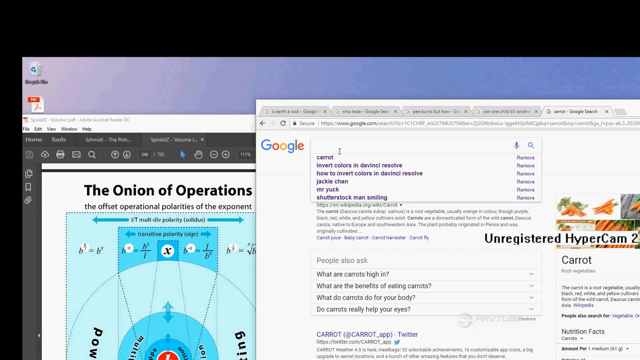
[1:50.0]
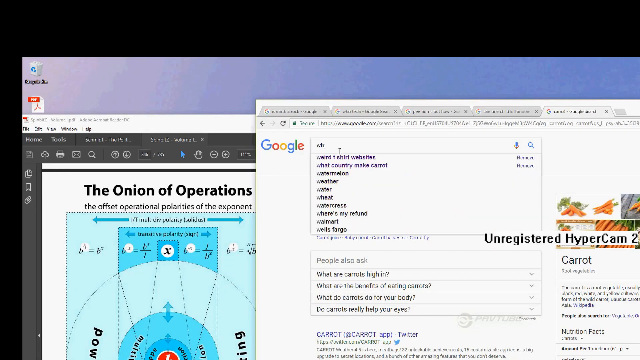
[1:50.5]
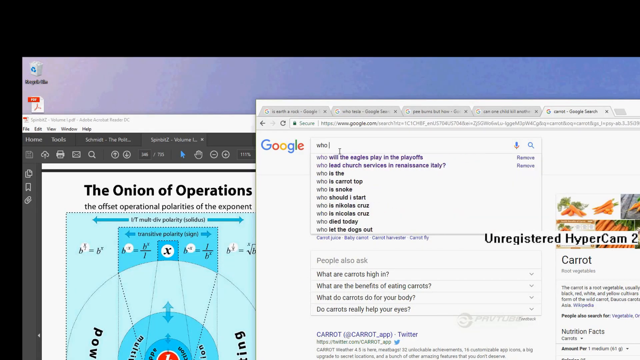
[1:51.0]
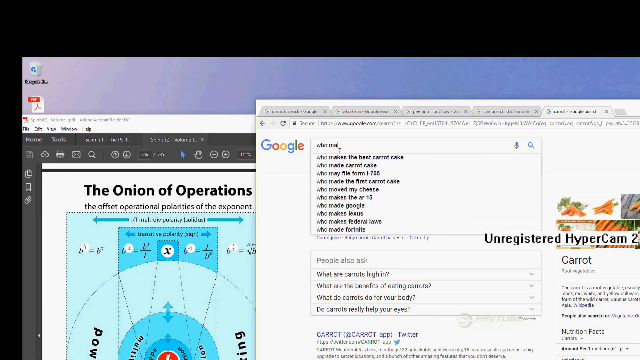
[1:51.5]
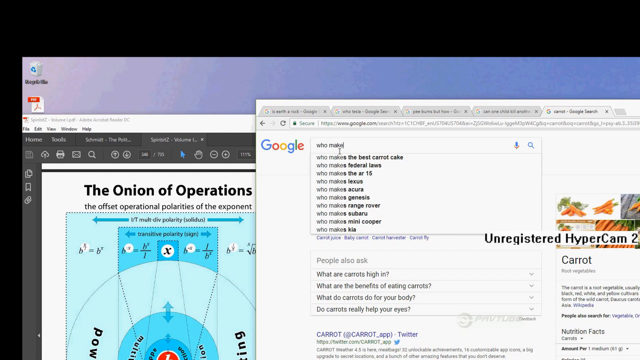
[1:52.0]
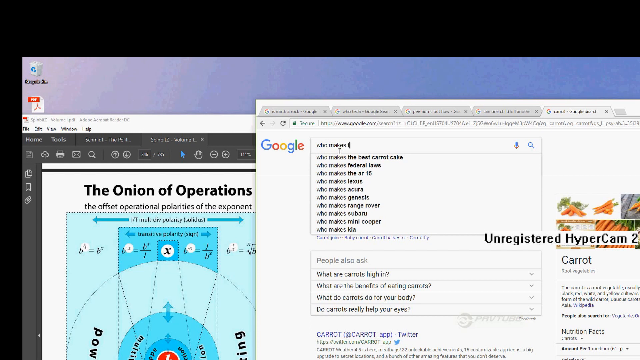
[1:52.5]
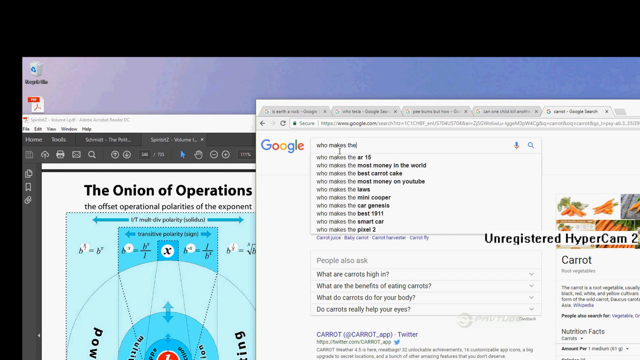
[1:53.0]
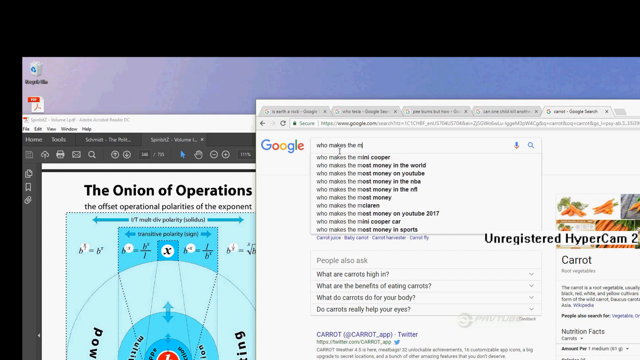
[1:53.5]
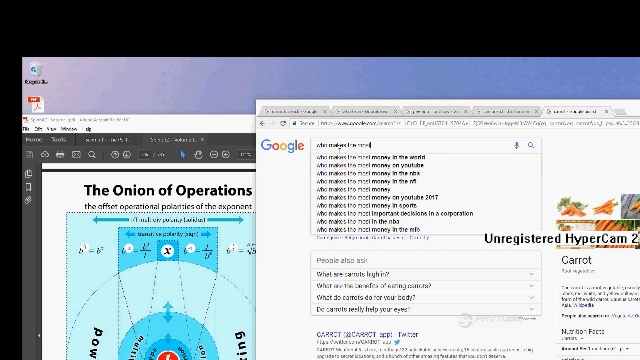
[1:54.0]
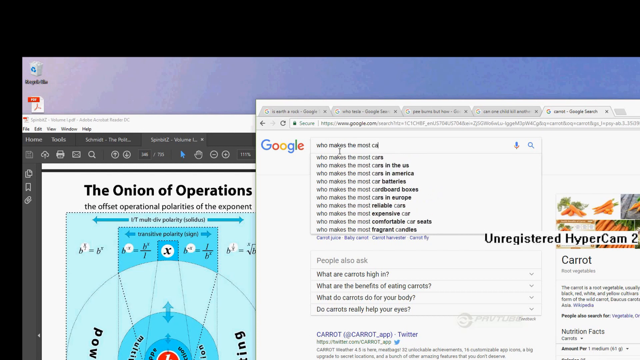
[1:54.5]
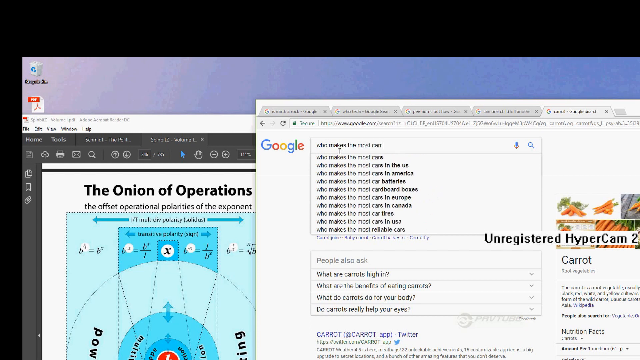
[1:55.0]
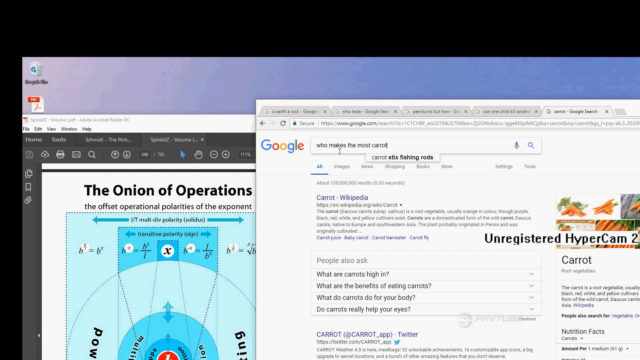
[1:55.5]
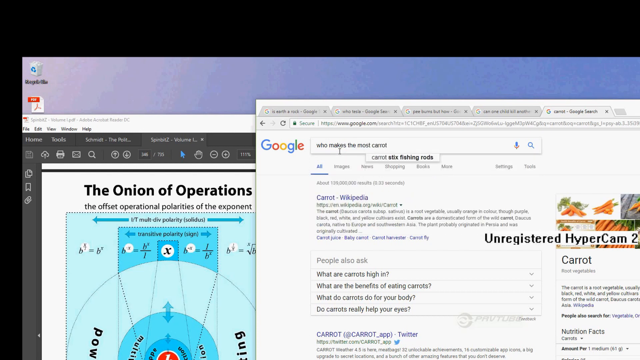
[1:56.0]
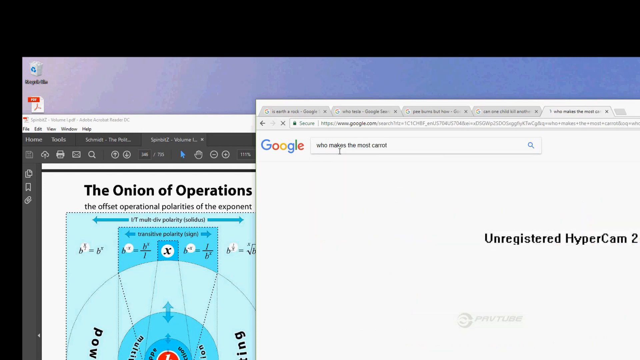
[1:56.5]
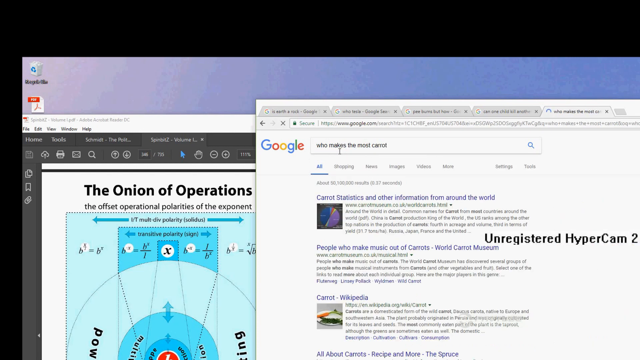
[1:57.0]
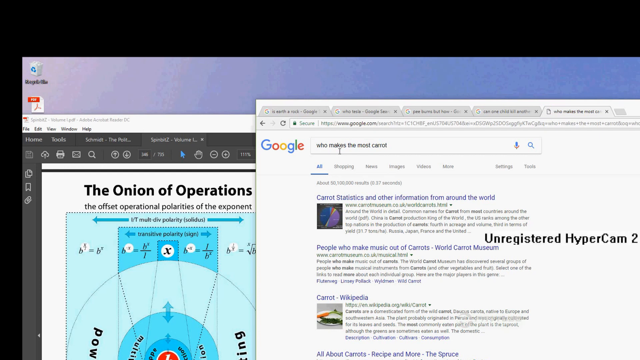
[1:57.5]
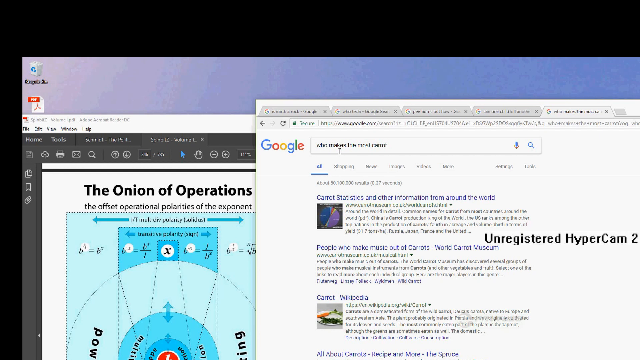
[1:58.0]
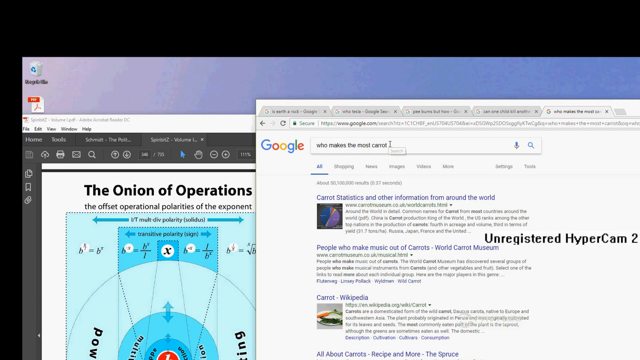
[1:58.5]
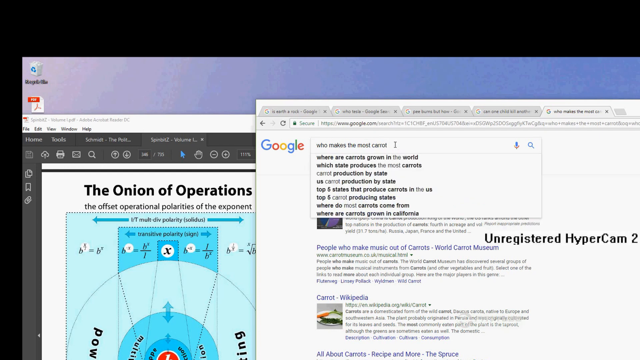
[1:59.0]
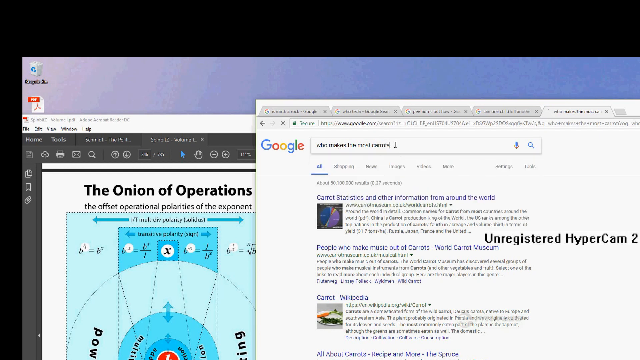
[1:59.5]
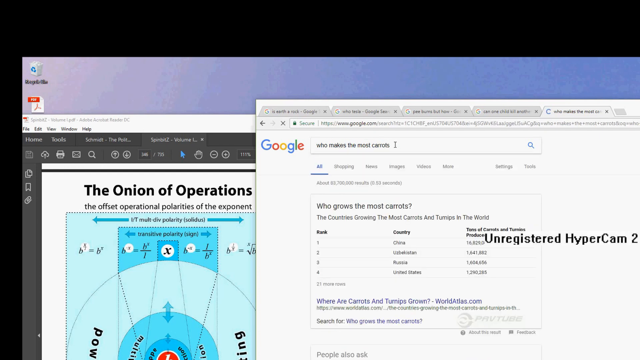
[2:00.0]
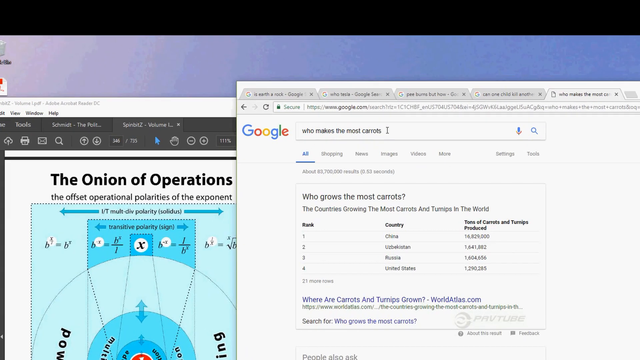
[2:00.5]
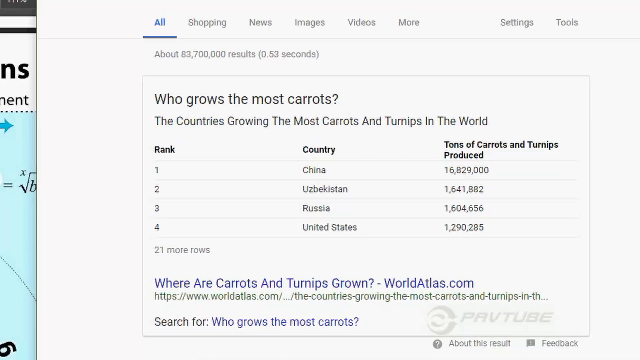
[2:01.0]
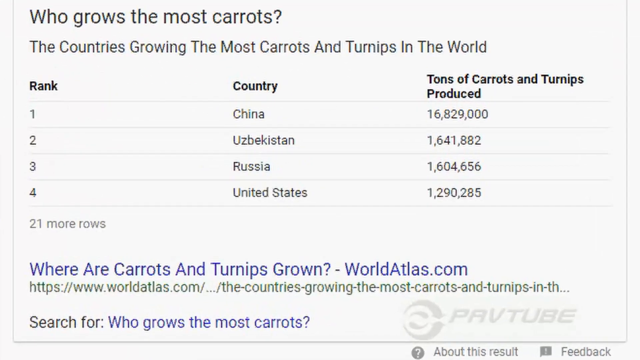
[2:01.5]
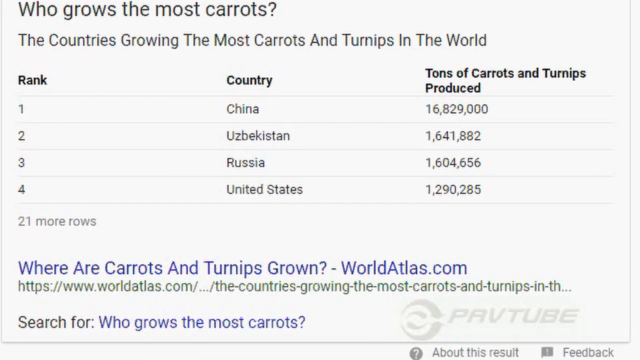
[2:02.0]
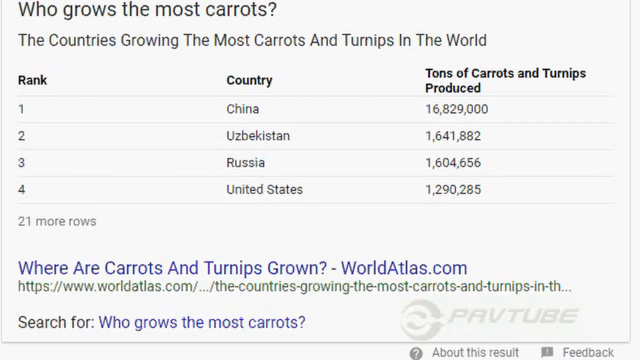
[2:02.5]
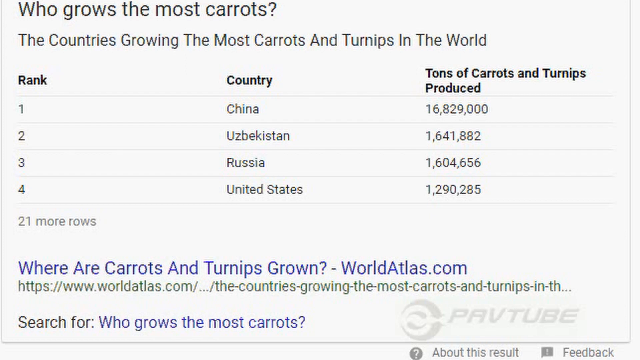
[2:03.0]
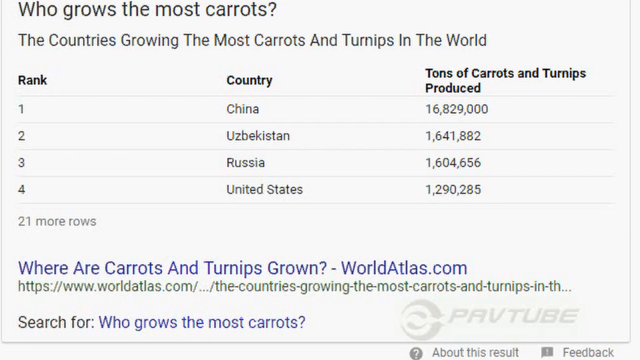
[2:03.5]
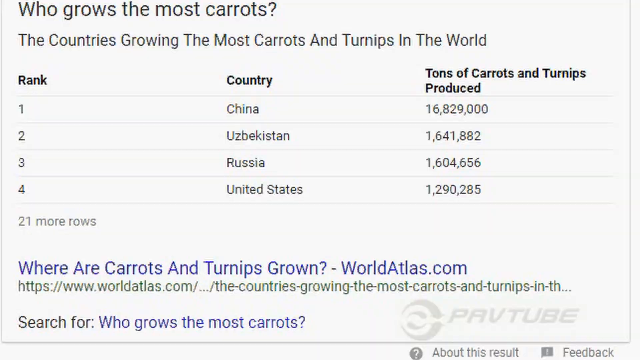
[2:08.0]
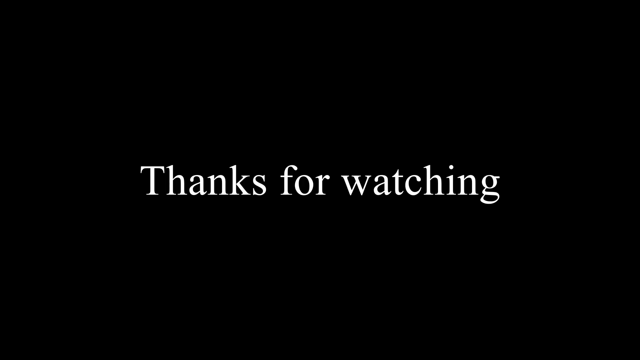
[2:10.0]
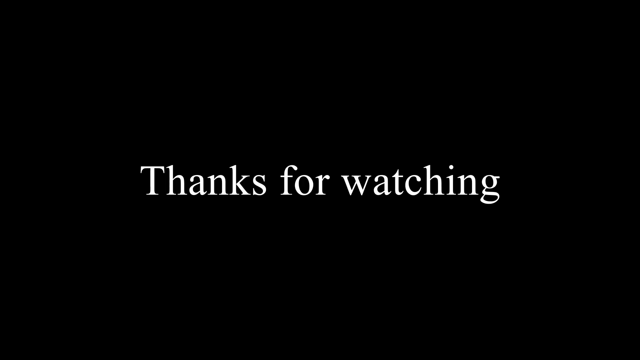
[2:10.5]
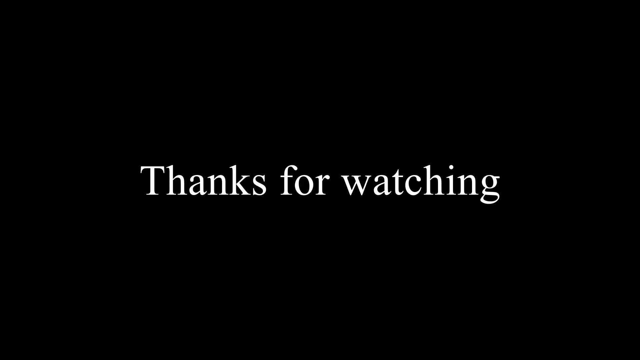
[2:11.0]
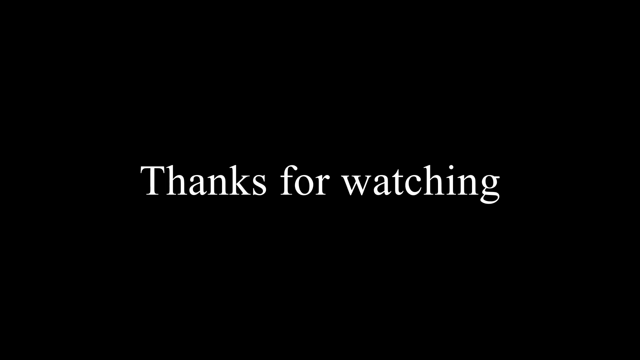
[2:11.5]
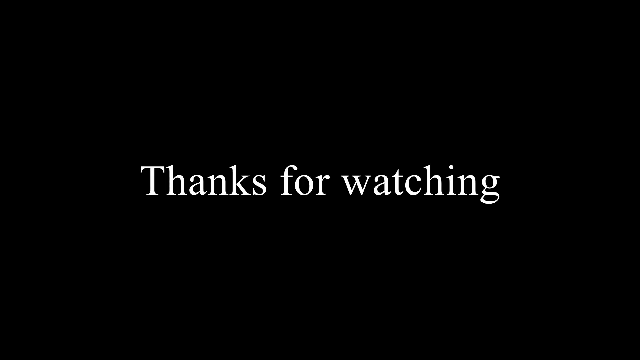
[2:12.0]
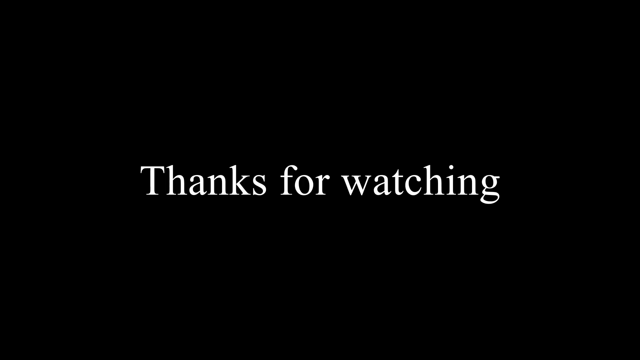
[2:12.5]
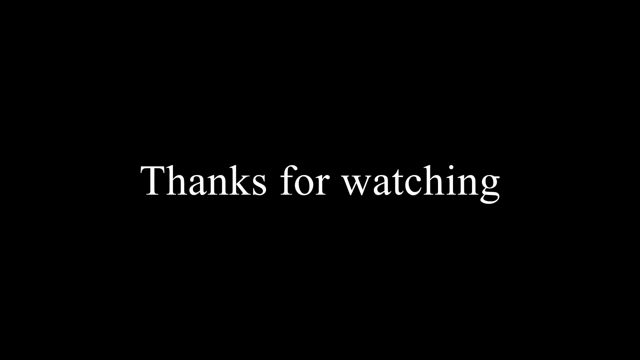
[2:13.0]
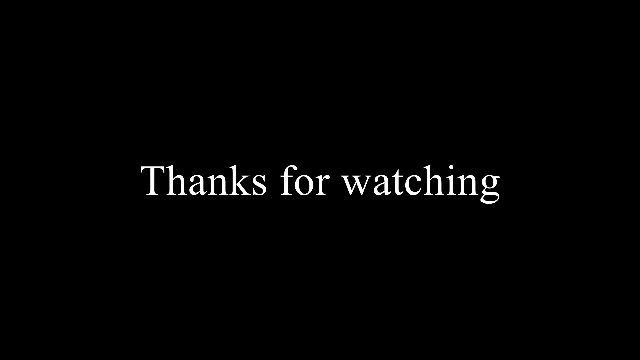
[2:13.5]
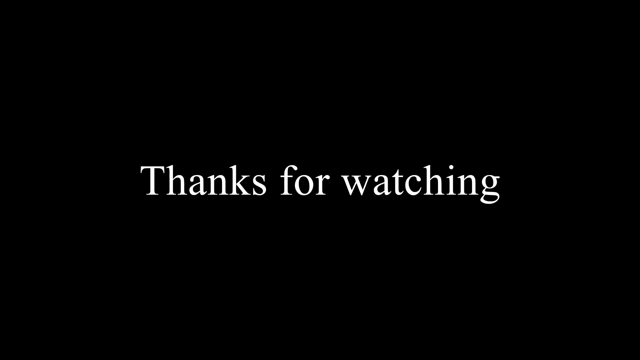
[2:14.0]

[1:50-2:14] Onion operations are shown, followed by a ranking of countries by tons of carrots and tempehs produced. Number one is China, number two is Uzbekistan, number three is Russia with 1,604,756 tons, and number four is the United States with 1,290,285 tons. The video appears to be about researching who invented carrots and how much each country produces.